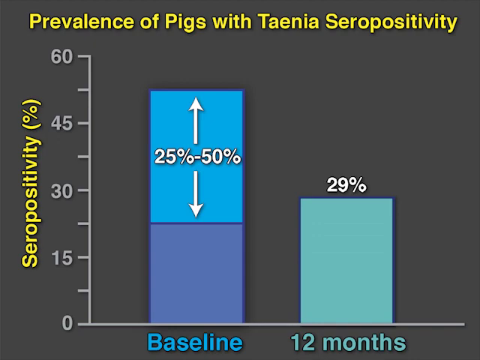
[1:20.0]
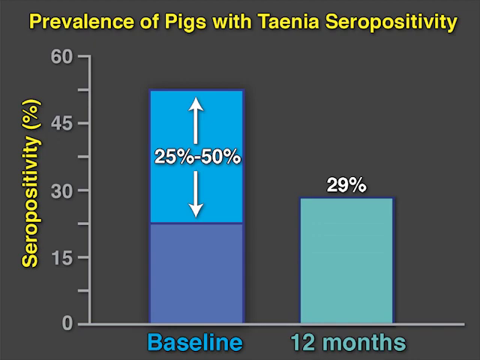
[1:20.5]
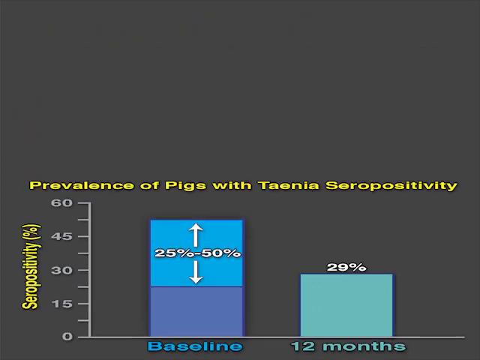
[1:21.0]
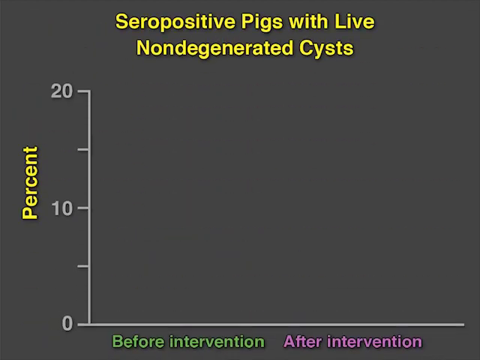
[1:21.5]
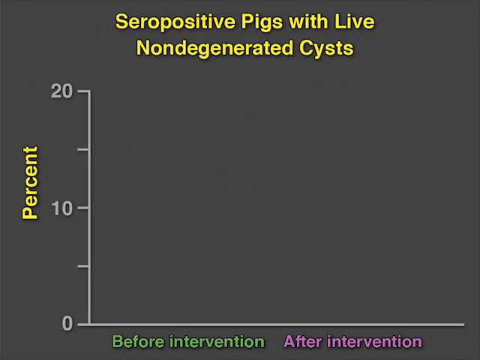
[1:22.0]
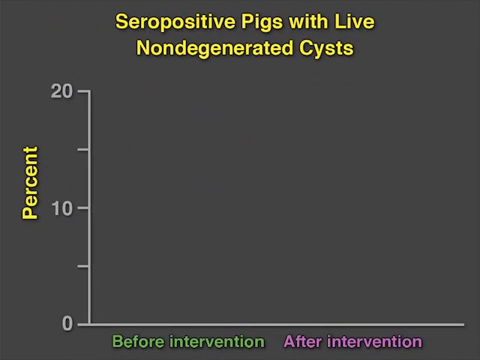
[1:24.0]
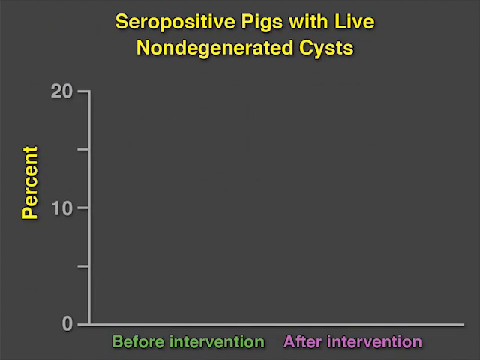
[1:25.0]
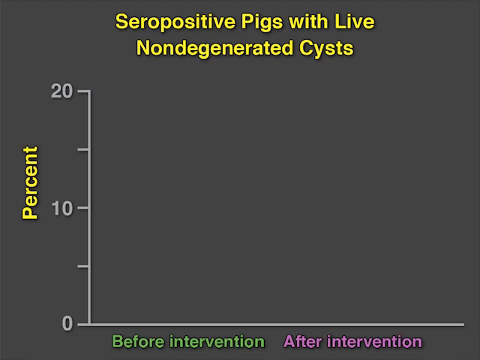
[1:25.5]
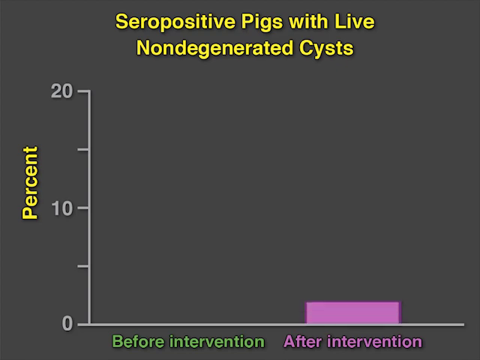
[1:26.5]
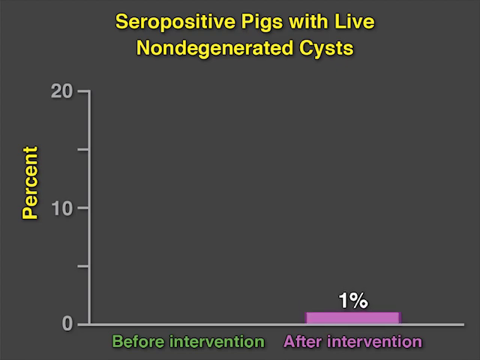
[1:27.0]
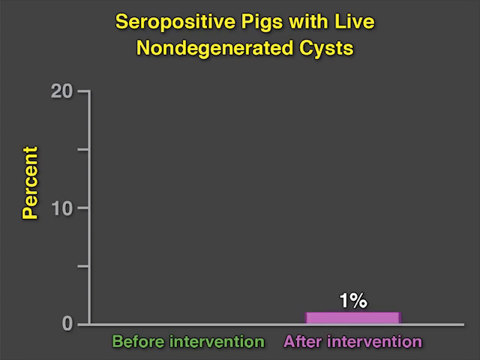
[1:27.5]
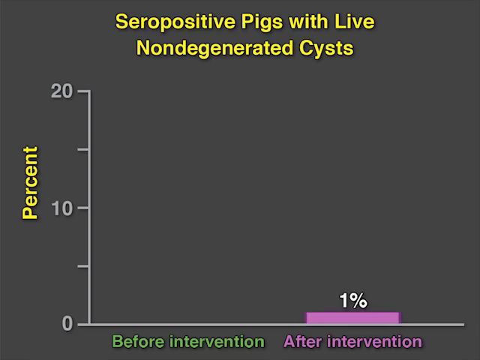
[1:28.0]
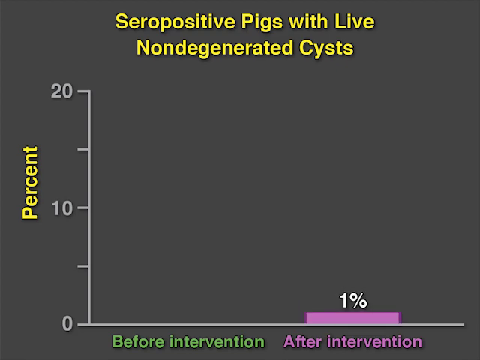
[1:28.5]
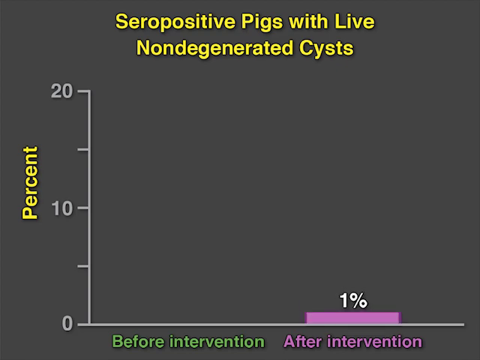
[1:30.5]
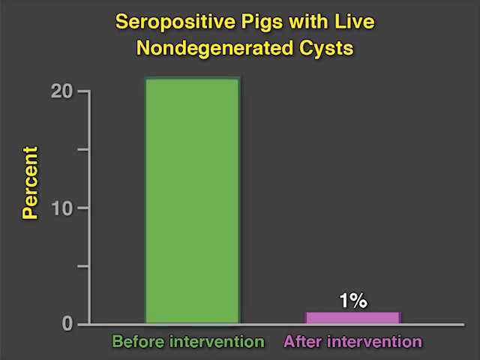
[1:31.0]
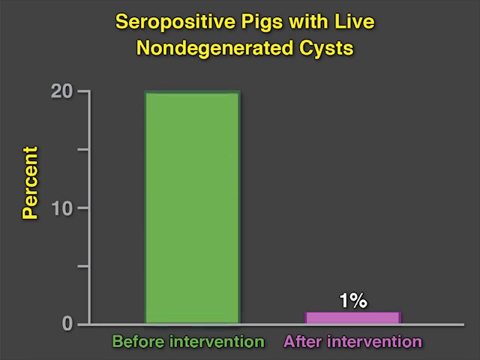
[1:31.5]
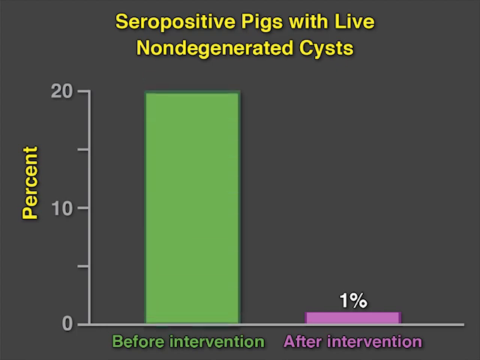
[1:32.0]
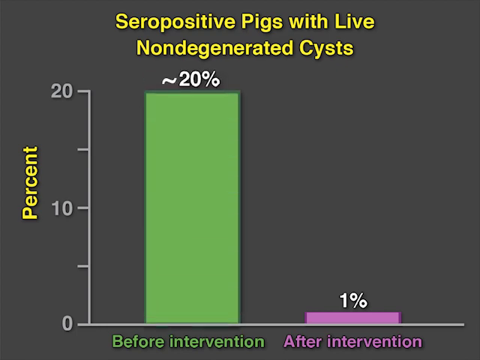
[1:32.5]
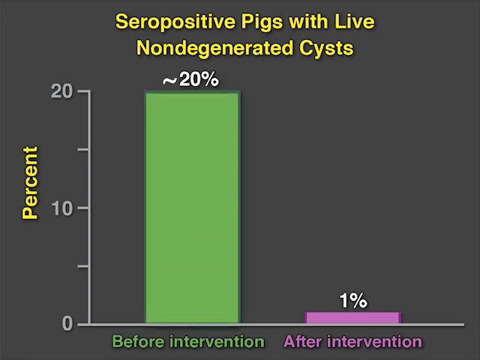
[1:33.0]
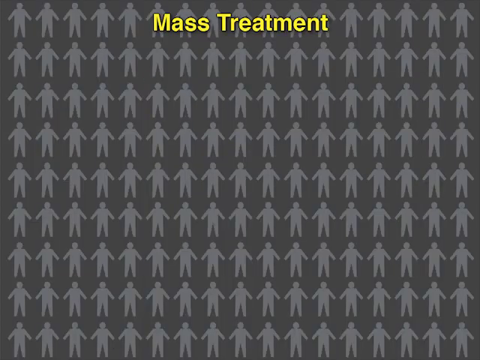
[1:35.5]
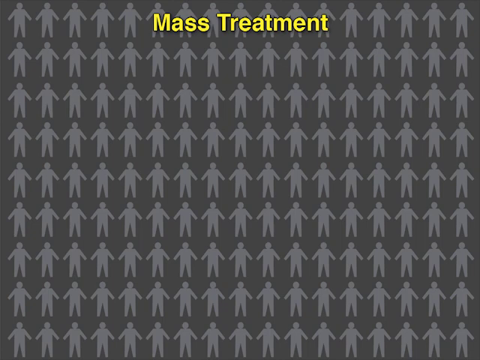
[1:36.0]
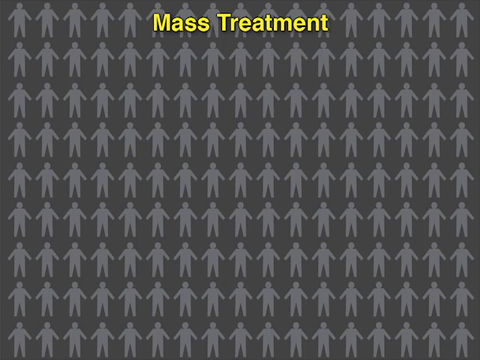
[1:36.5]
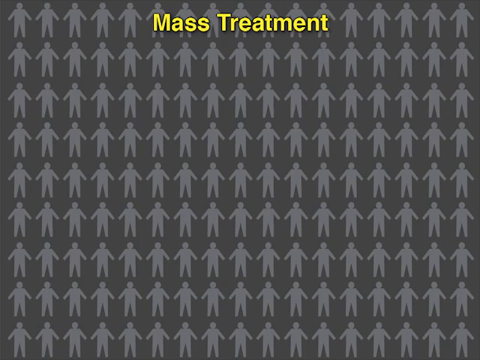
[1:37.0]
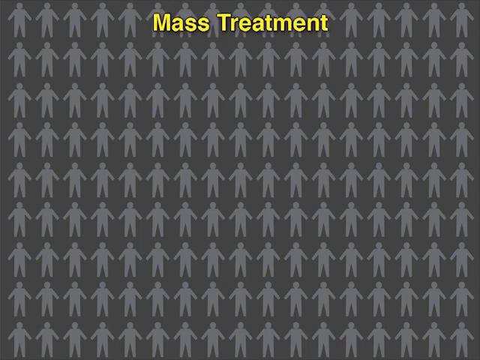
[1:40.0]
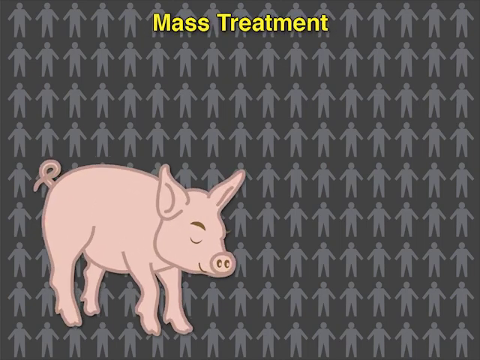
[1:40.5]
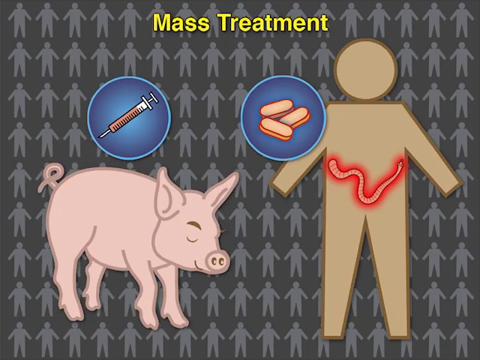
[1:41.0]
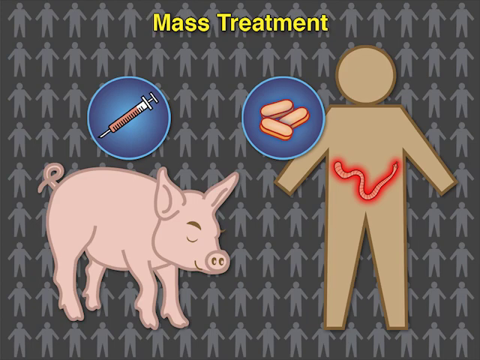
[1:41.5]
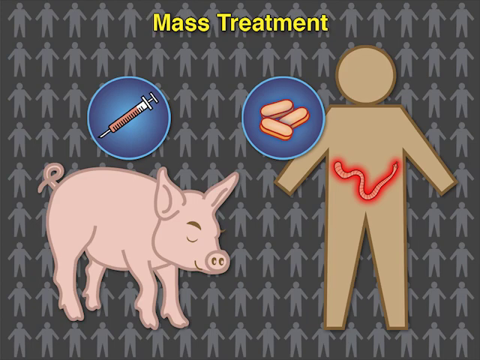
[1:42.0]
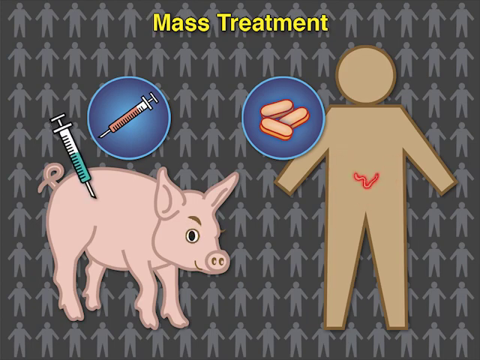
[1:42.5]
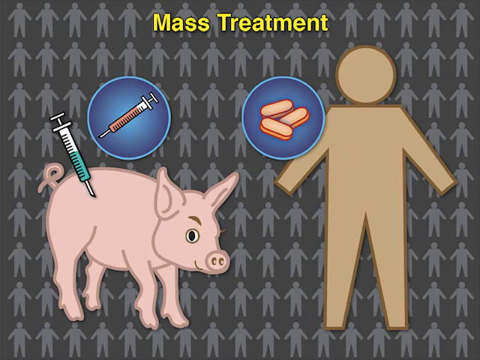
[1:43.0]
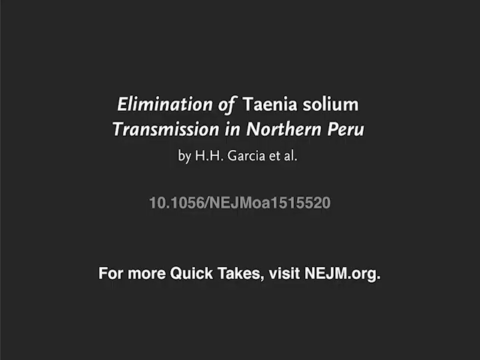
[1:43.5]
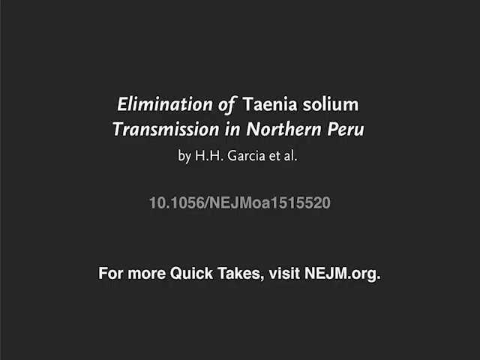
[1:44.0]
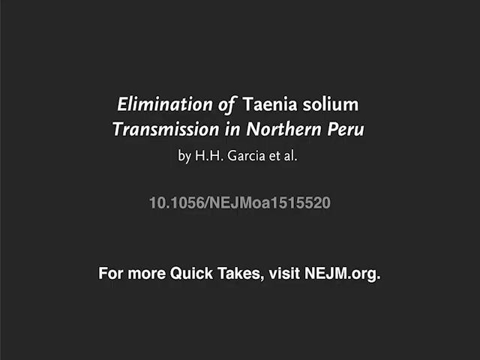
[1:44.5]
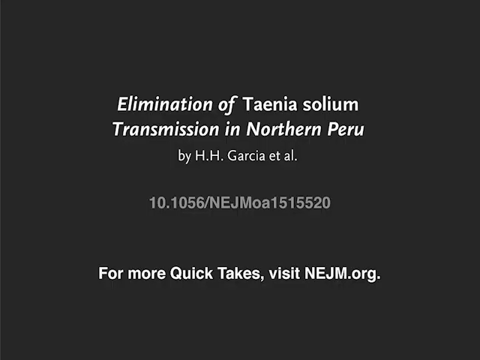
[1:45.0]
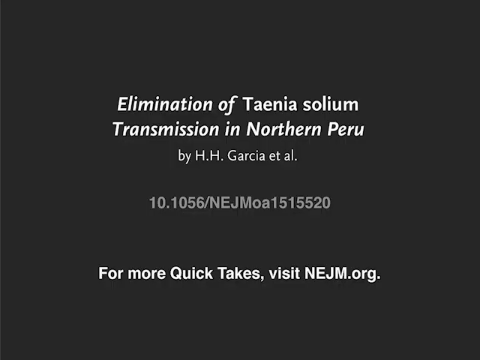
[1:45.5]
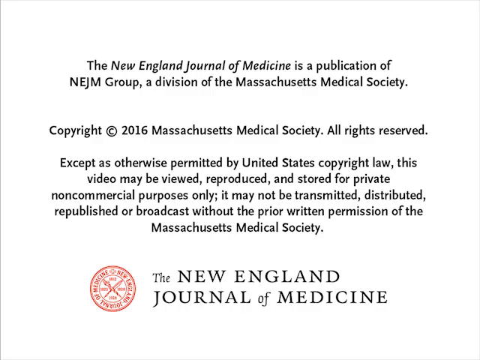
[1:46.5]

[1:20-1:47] A yellow title reads "seropositive pigs with live non-degenerated cysts" above a graph whose y-axis is titled "percent" and ranges from 0 to 20, with "before intervention" and "after intervention" on the x-axis. The "percent" label is in yellow, like the title, while "before intervention" is in green lettering and "after intervention" in purple. A purple bar appears above after intervention at one percent, and a green bar above before intervention reaches 28 percent. The next screen has the title "Mass Treatment" in yellow letters on a background of stick men with a grey fill. The cartoon pig and the cartoon person appear again, the person with a tapeworm visible inside their stomach. A blue circle with a syringe inside is above the pig, and a blue circle with three pills inside is beside the person. An animation shows a syringe entering the pig's body, and the video ends with a closing slide reading "Elimination of Taenia solium transmission in northern Peru. by H. H. Garcia et al."